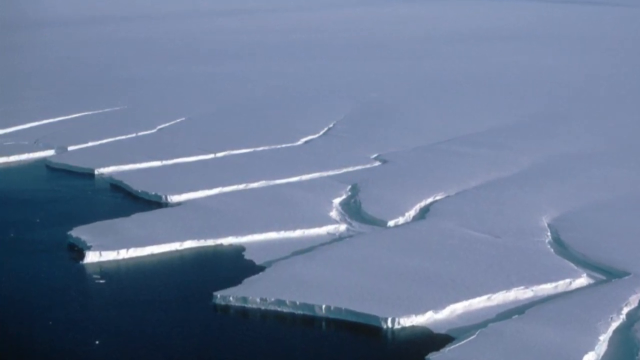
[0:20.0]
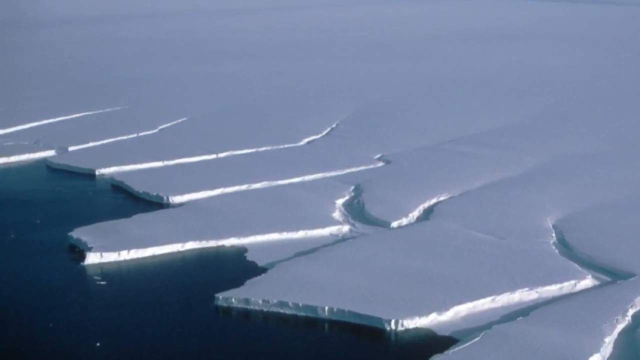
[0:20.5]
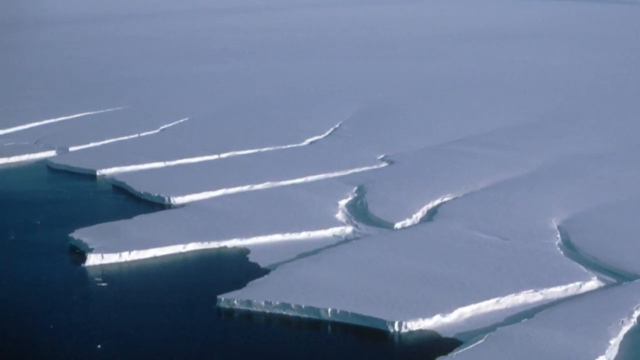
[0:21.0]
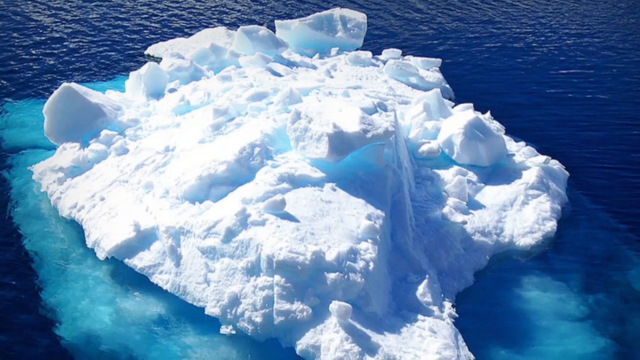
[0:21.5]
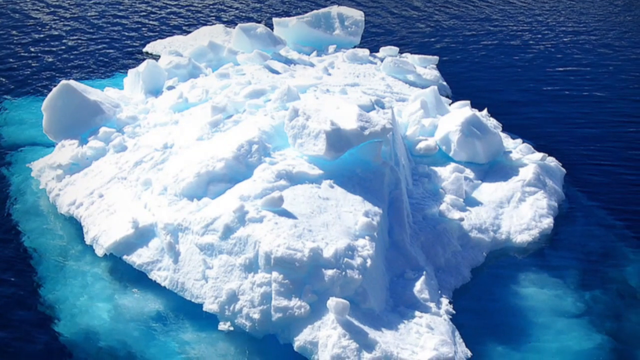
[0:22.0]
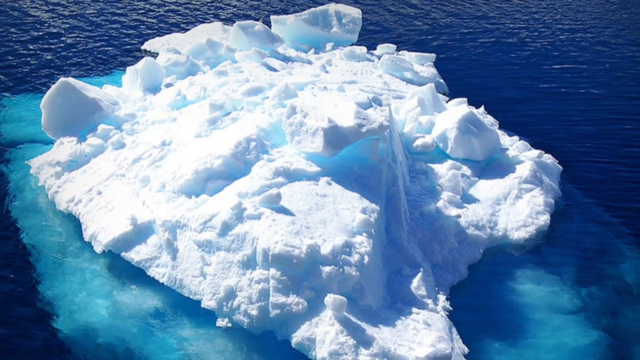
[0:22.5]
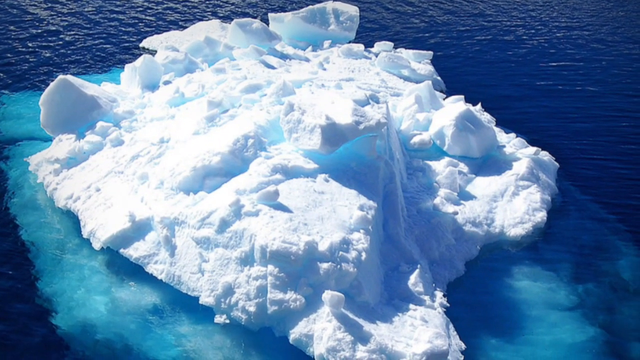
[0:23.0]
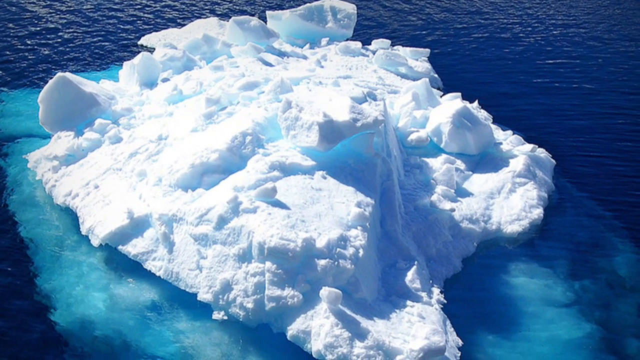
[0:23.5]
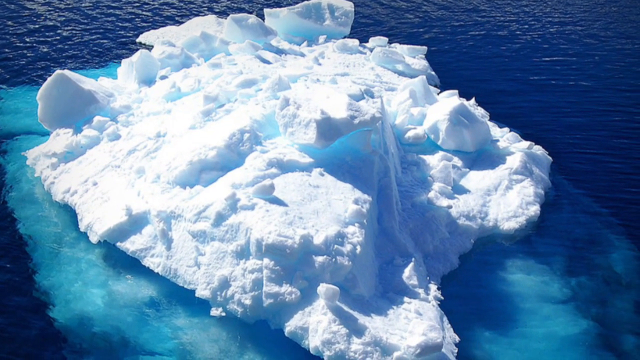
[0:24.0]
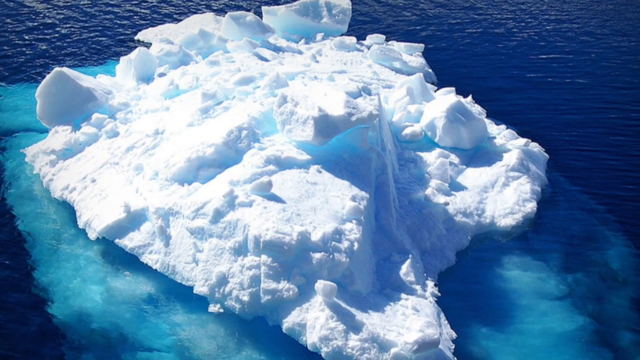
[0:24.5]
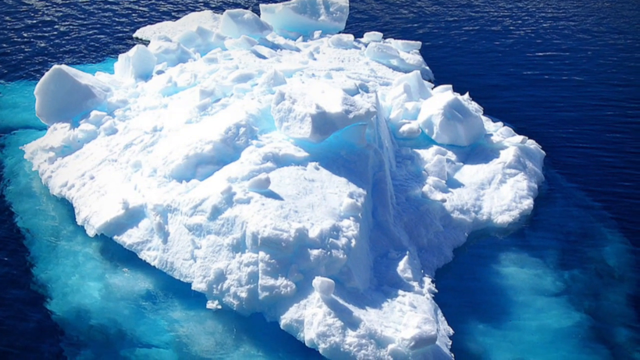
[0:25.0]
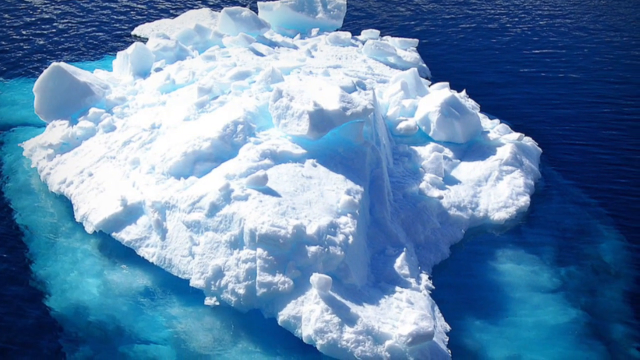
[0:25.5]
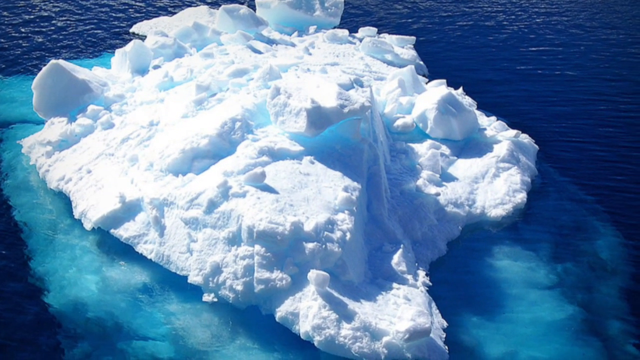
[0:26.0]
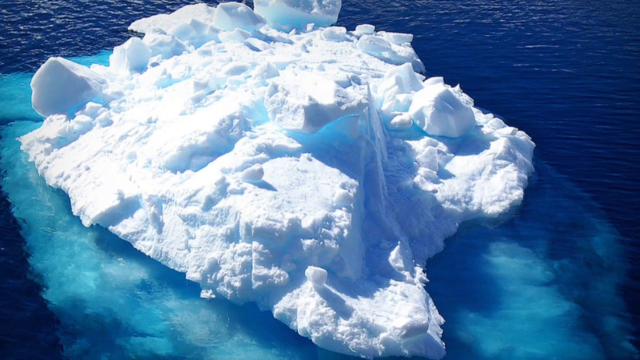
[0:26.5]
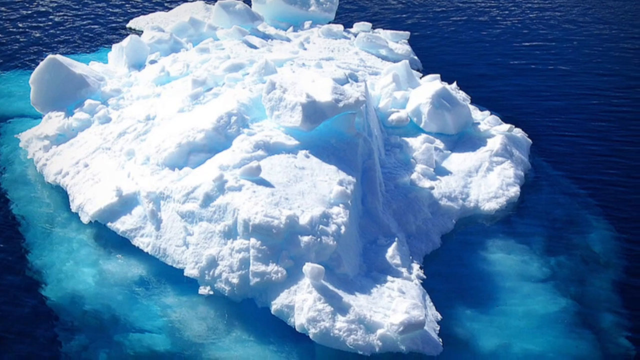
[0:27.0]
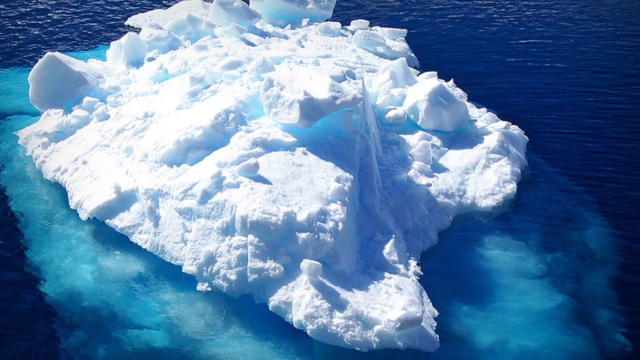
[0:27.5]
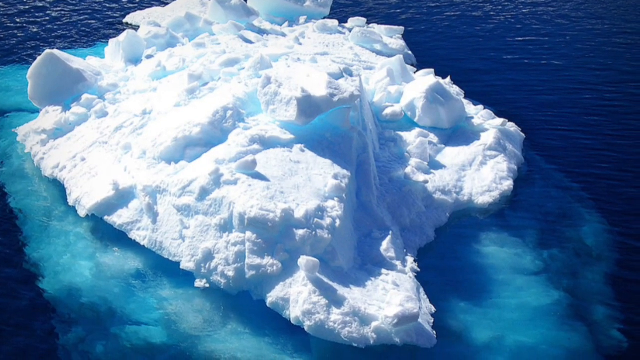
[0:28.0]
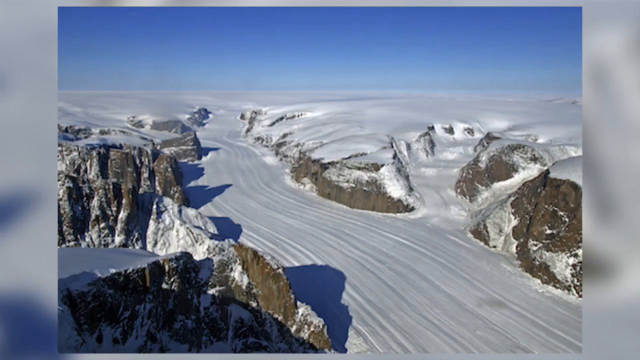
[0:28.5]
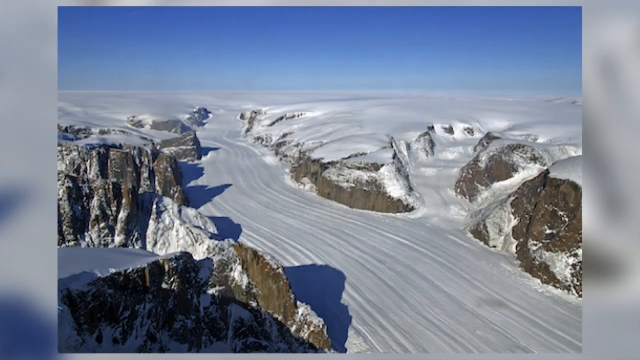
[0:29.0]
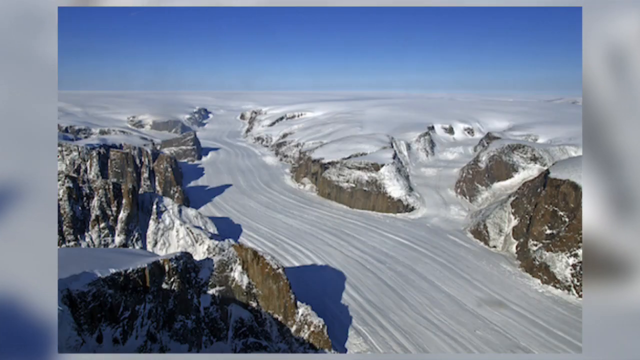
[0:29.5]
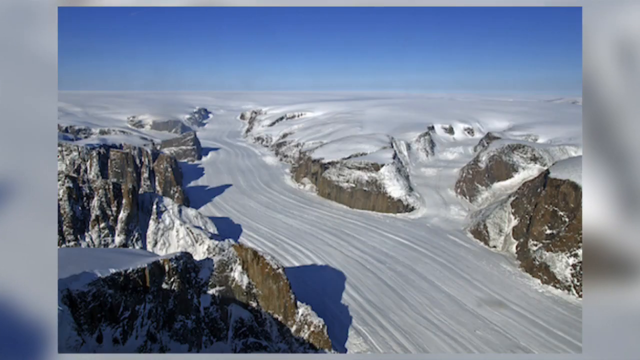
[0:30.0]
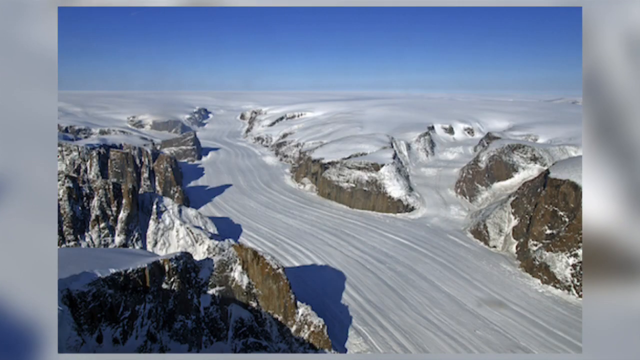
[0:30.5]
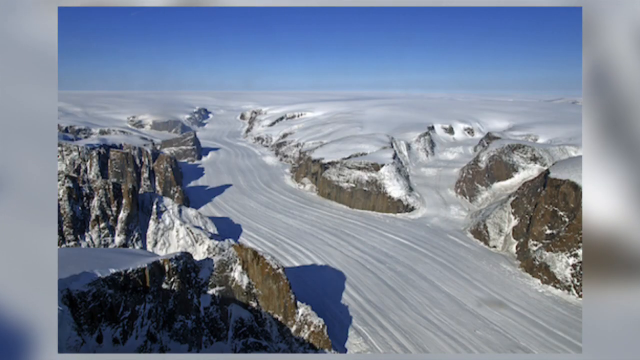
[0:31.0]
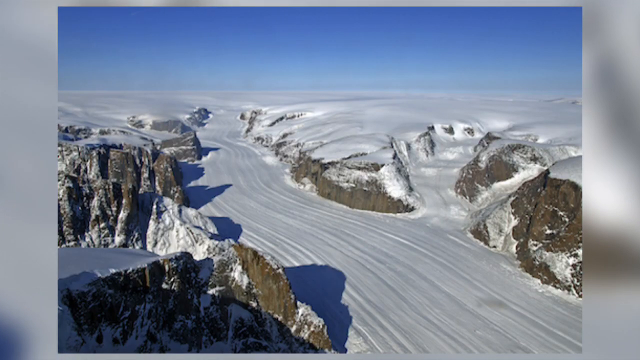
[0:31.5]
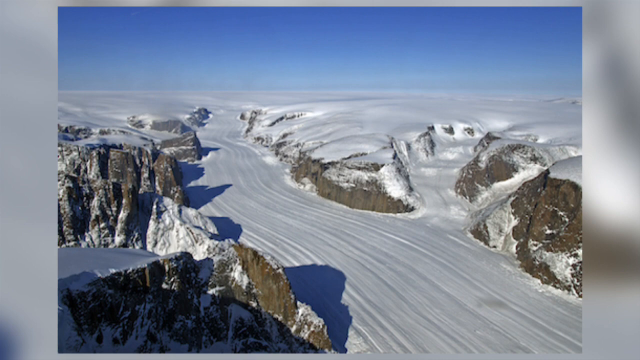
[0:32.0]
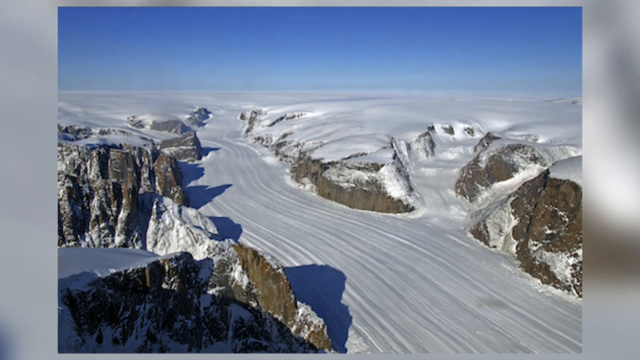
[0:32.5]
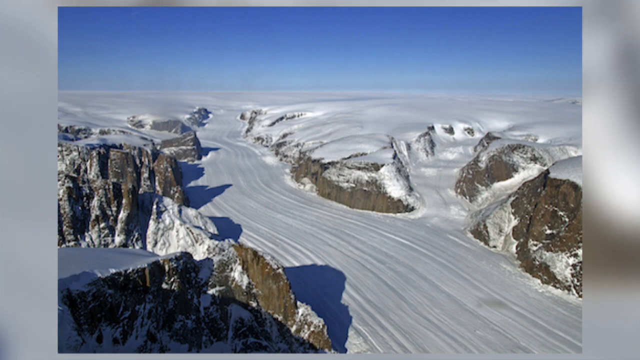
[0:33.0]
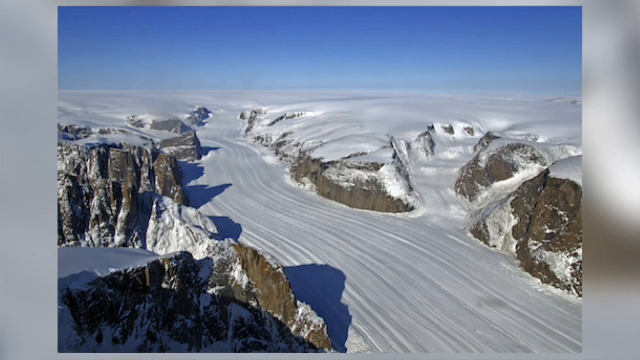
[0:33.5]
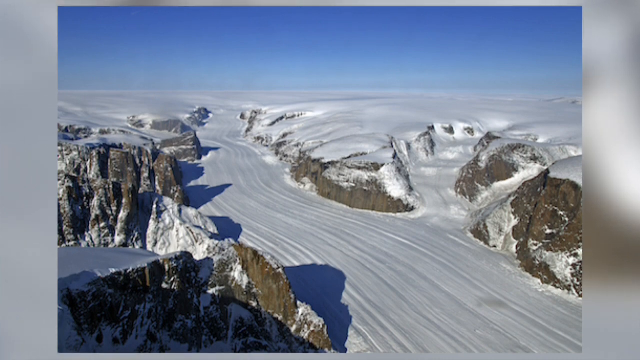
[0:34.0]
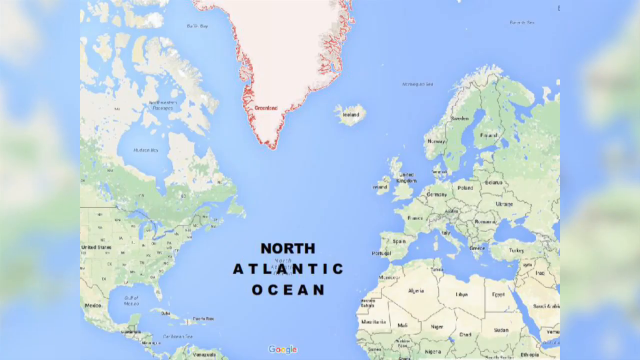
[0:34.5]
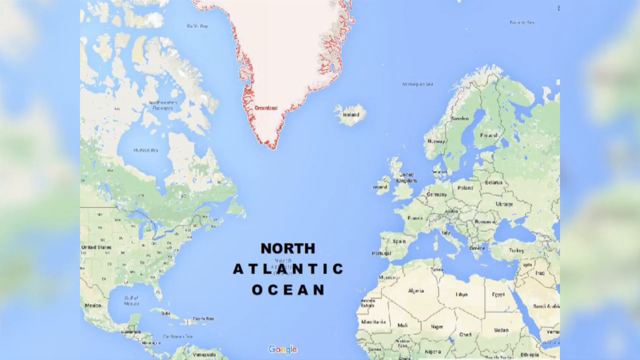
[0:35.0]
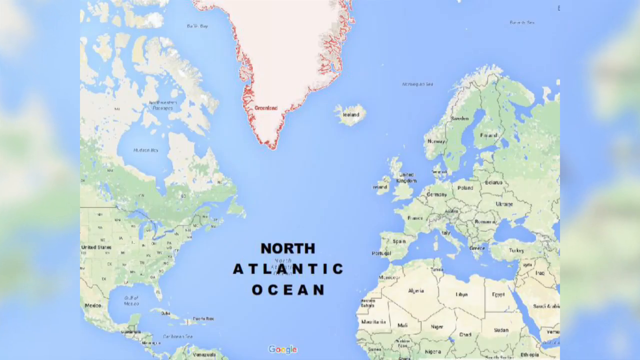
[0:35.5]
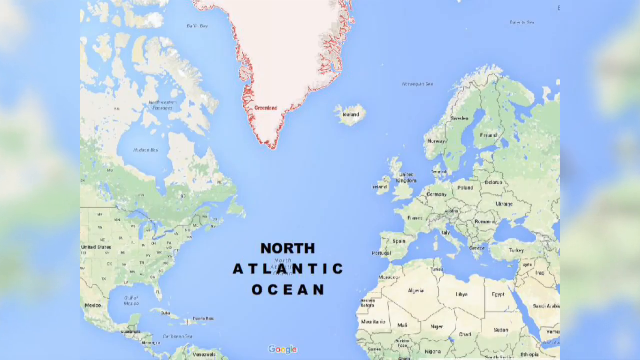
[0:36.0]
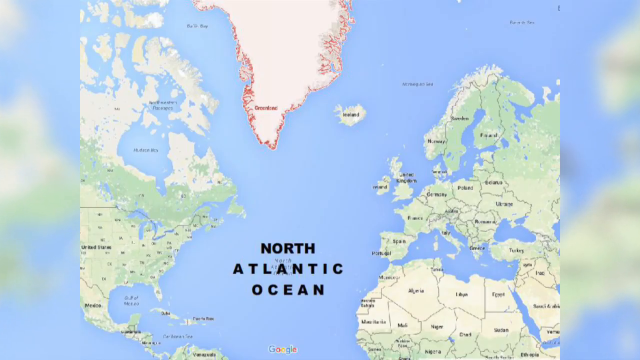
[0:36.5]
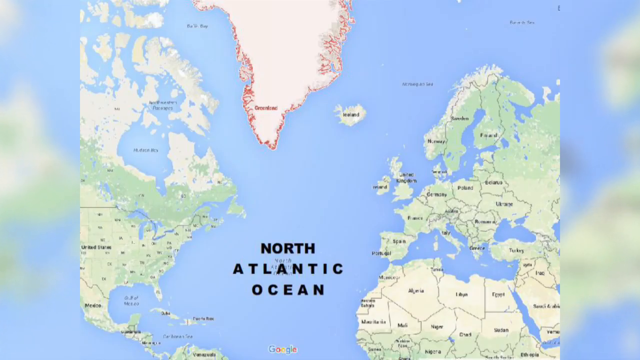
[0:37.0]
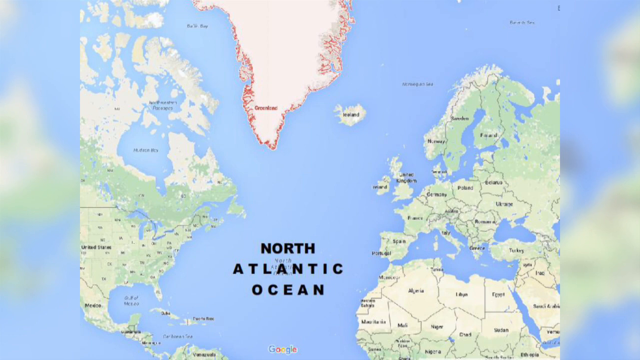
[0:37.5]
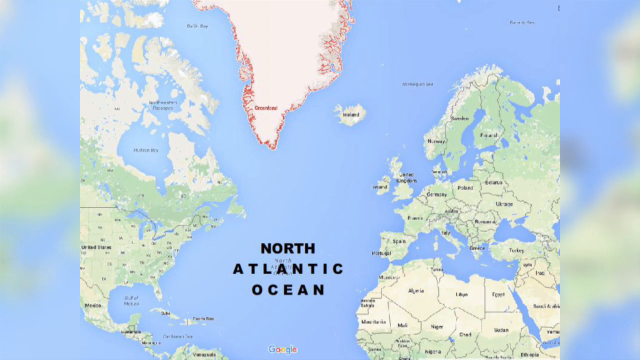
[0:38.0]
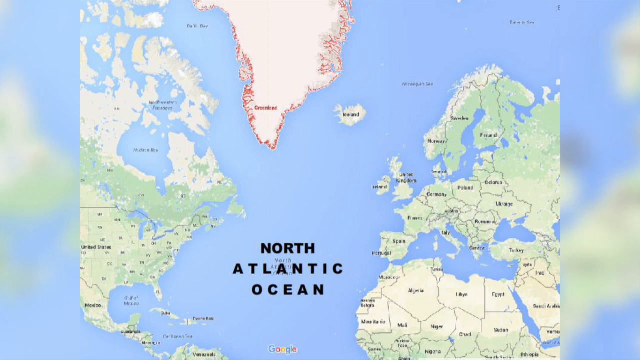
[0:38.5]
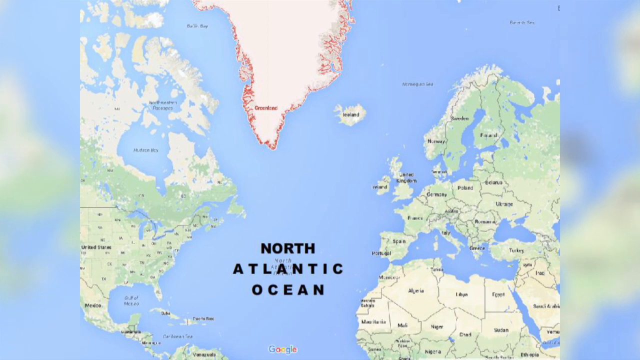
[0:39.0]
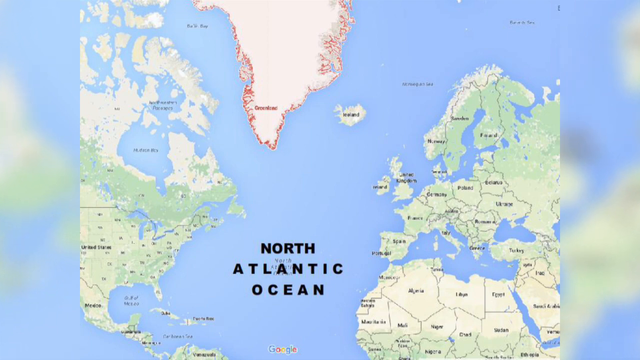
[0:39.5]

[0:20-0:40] An image shows a very large iceberg that looks like a large mountain of snow and ice piled in layers in the middle of the ocean, which is a very deep blue. The next image shows a large amount of snow and ice on several rocky mountains that are almost completely covered in snow. There are several mountains along the left of the image and also on the right, and the middle is completely covered with snow with several vertical lines in it. Next comes a map with "North Atlantic Ocean" displayed in large black text. The map shows various countries, and one of them, in the top centre of the map, is outlined in red.